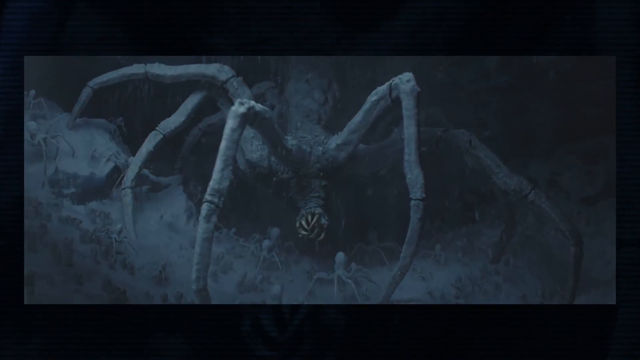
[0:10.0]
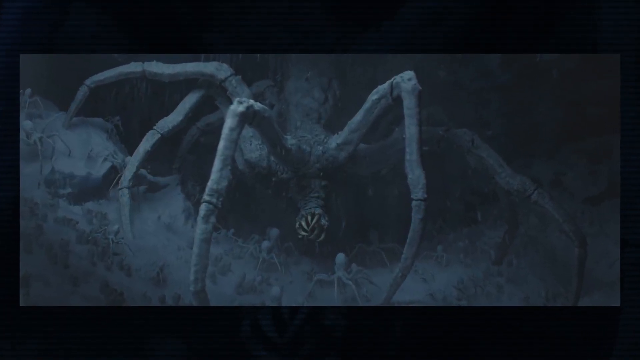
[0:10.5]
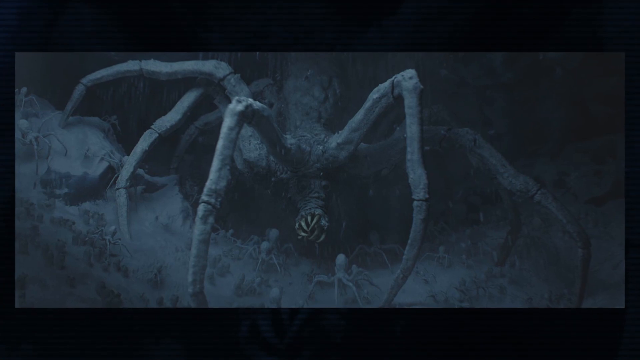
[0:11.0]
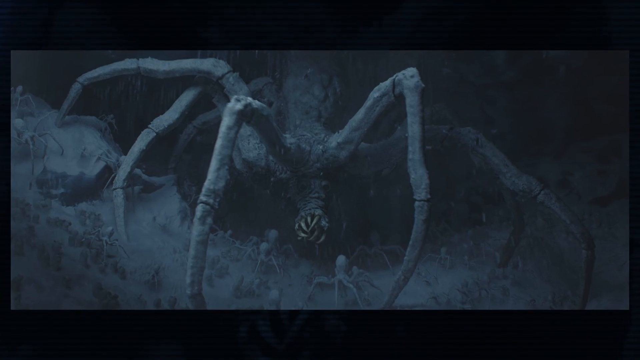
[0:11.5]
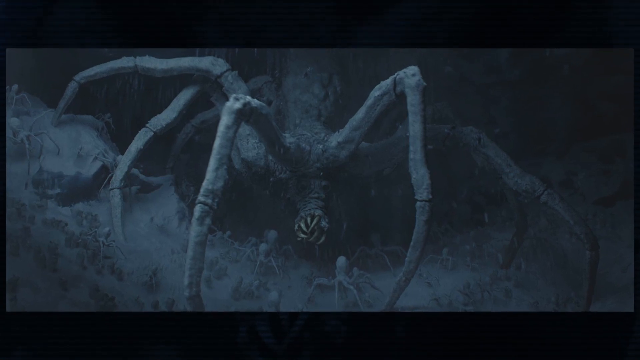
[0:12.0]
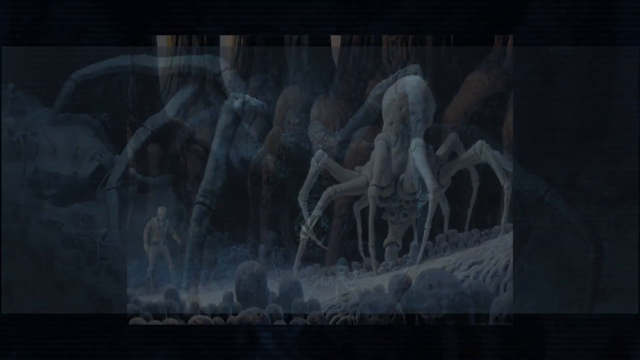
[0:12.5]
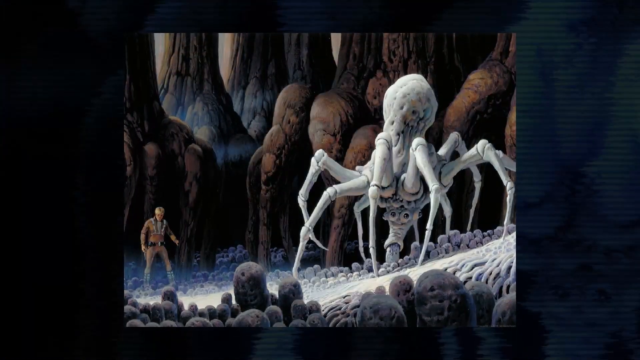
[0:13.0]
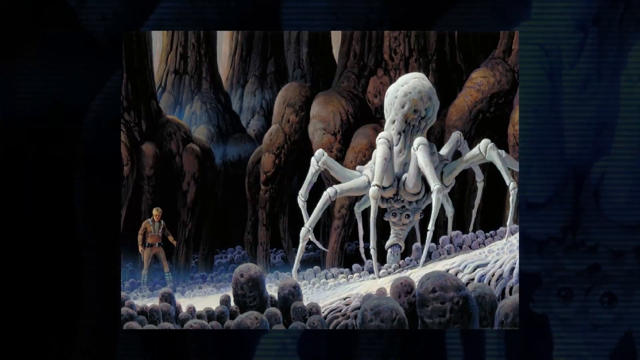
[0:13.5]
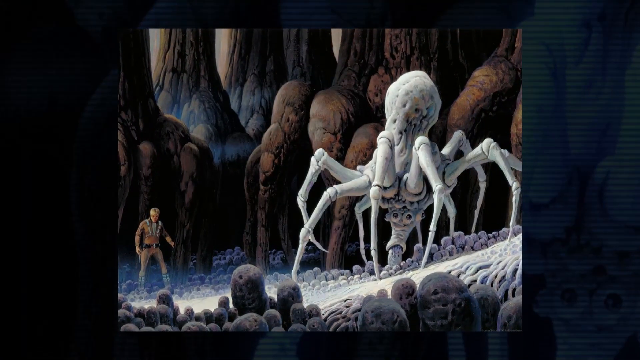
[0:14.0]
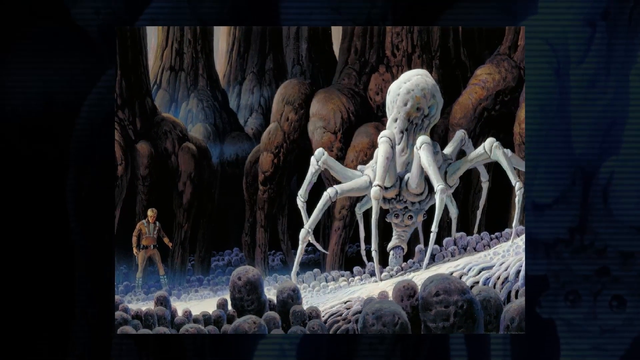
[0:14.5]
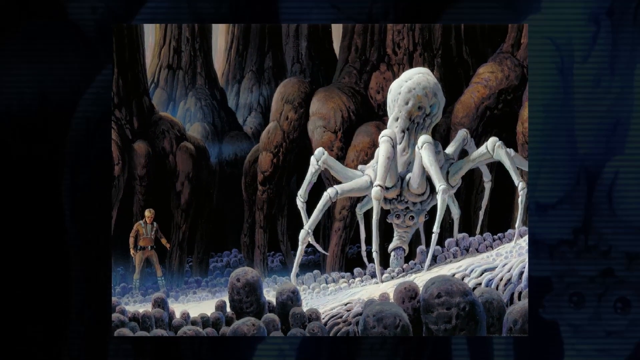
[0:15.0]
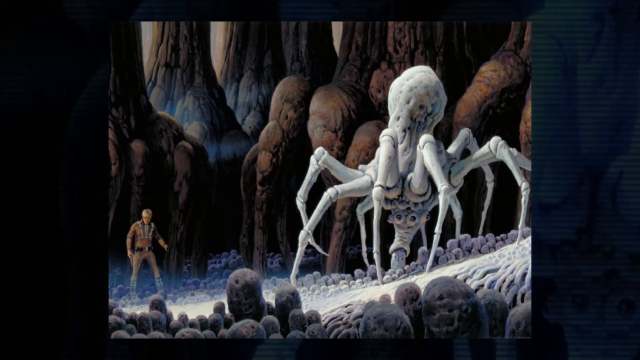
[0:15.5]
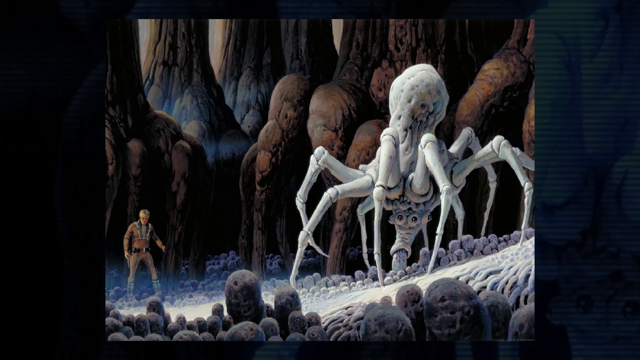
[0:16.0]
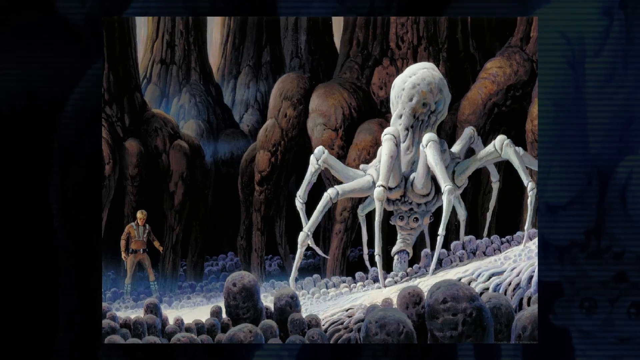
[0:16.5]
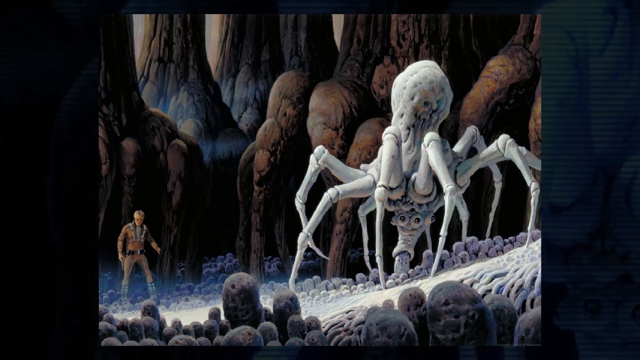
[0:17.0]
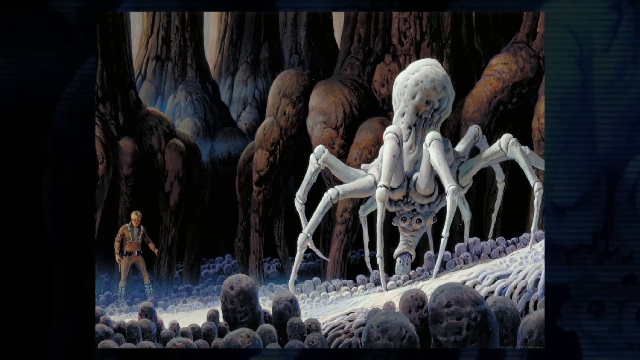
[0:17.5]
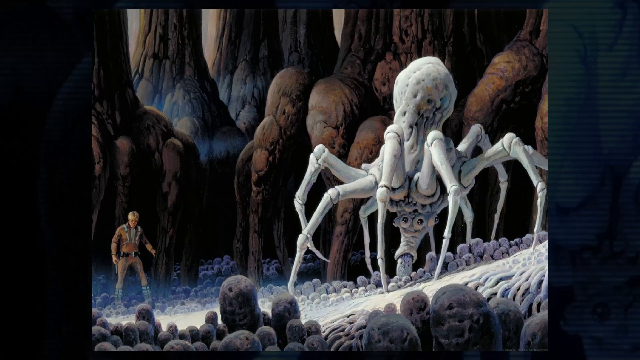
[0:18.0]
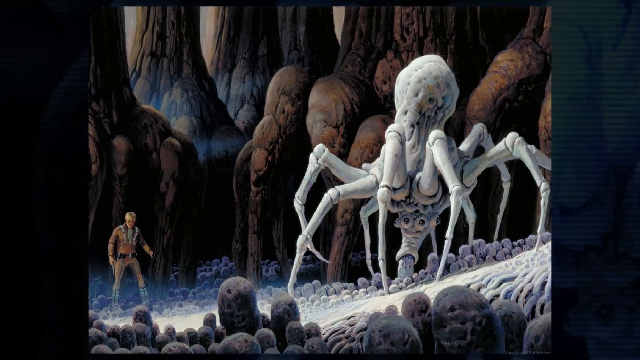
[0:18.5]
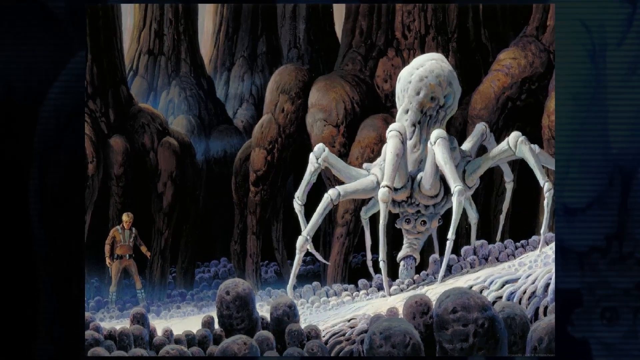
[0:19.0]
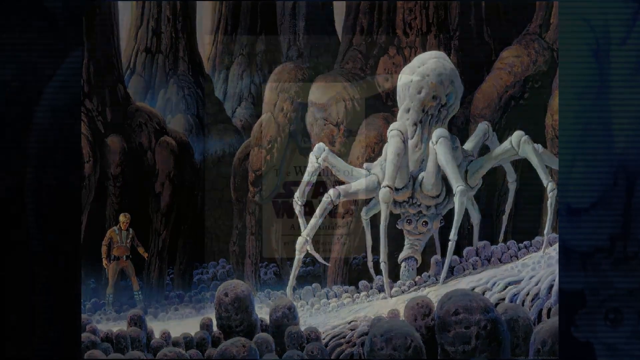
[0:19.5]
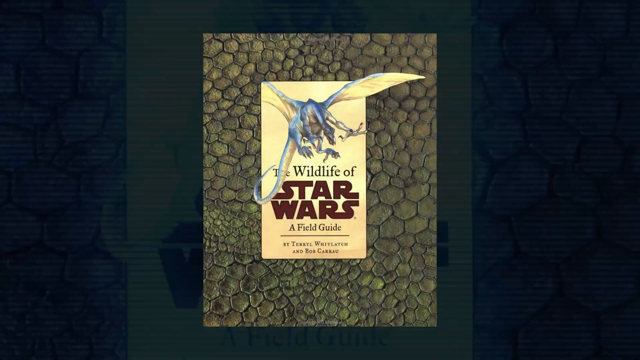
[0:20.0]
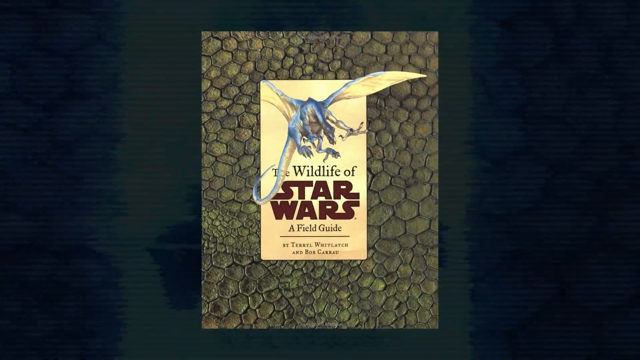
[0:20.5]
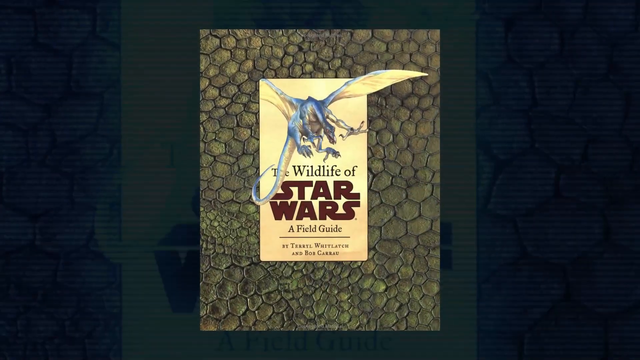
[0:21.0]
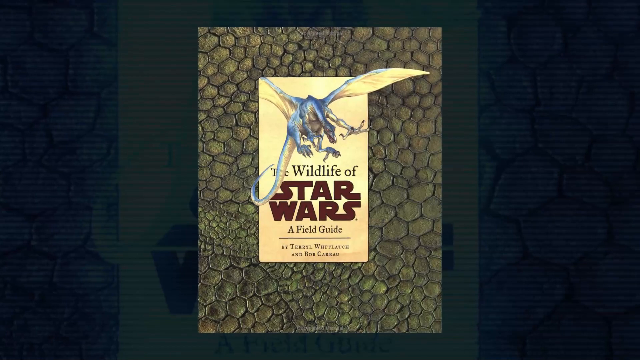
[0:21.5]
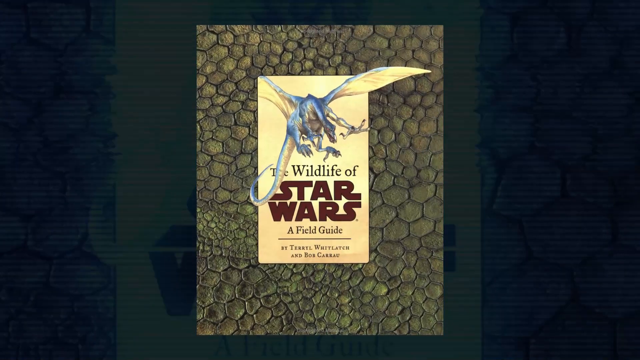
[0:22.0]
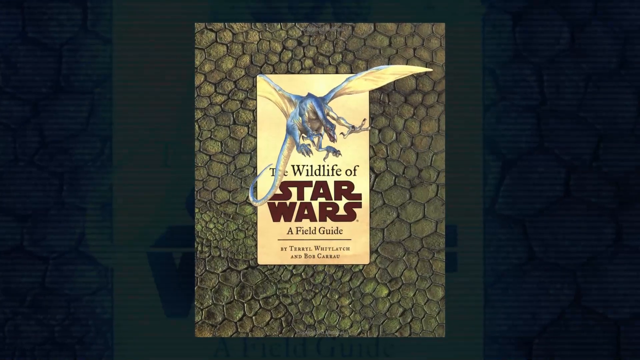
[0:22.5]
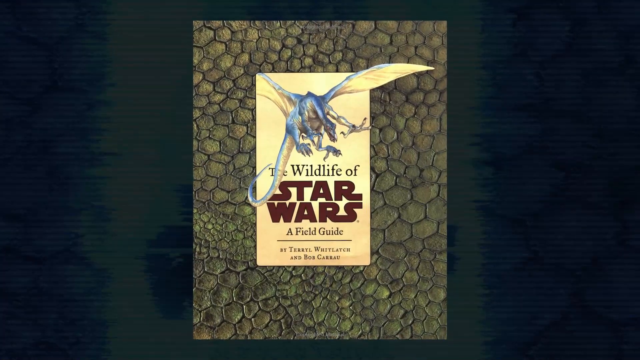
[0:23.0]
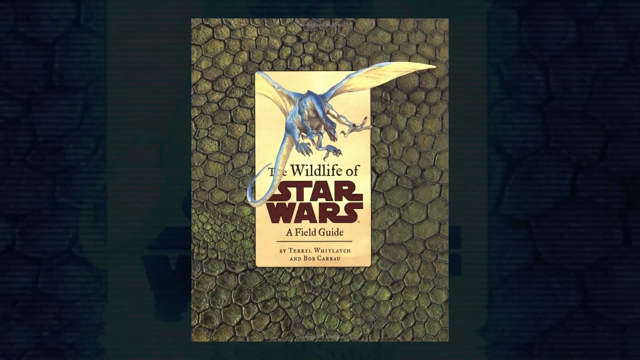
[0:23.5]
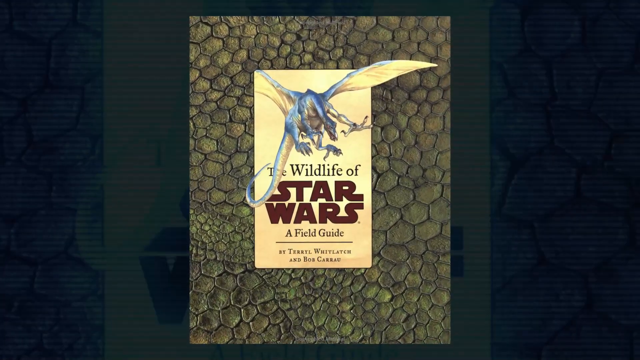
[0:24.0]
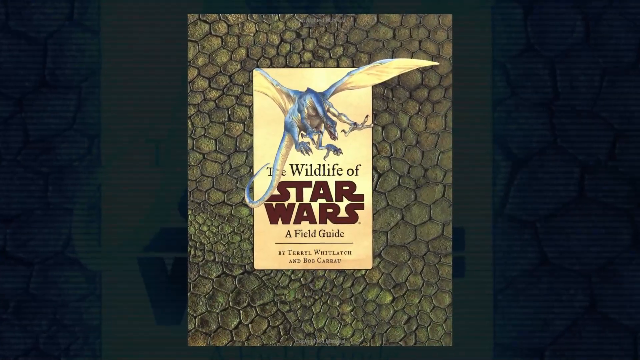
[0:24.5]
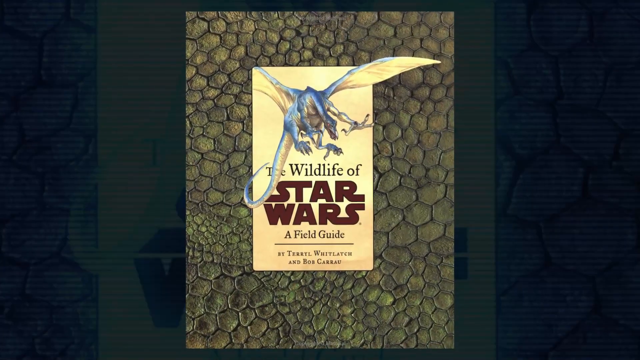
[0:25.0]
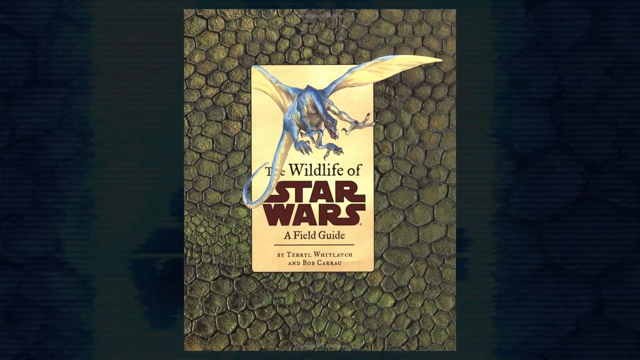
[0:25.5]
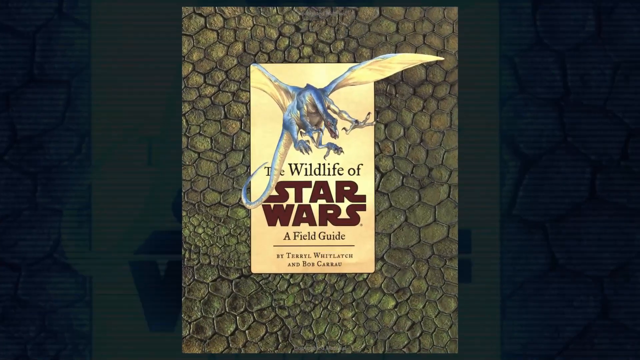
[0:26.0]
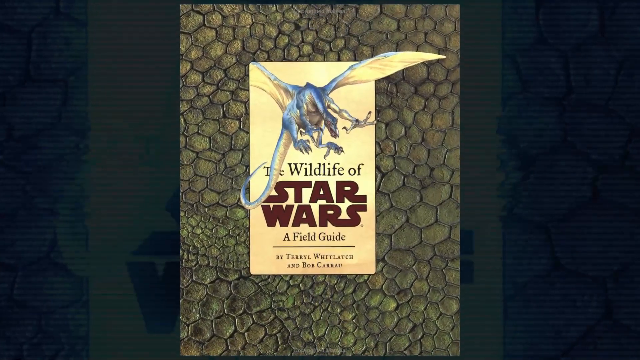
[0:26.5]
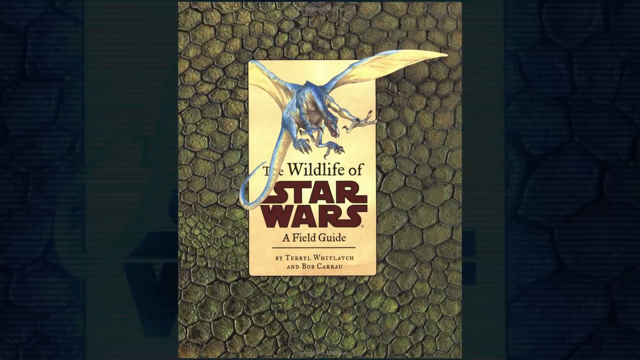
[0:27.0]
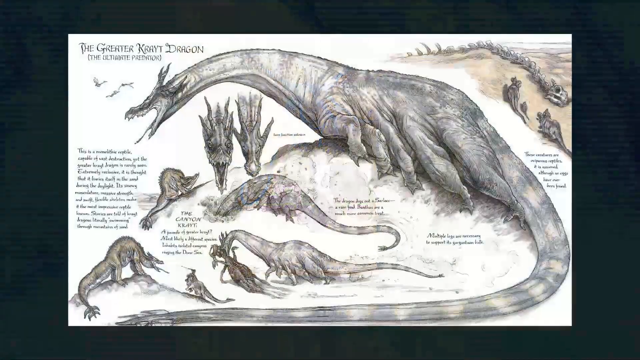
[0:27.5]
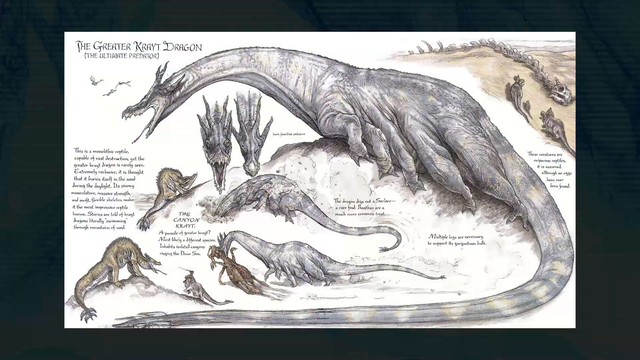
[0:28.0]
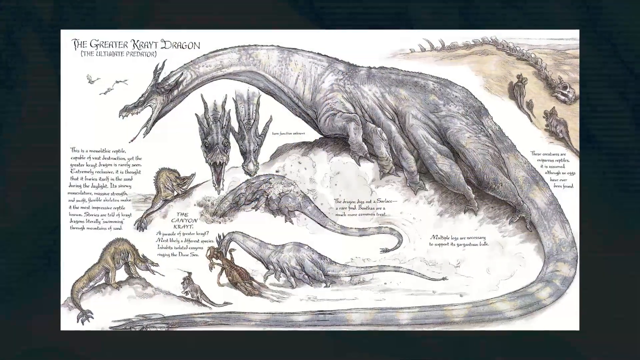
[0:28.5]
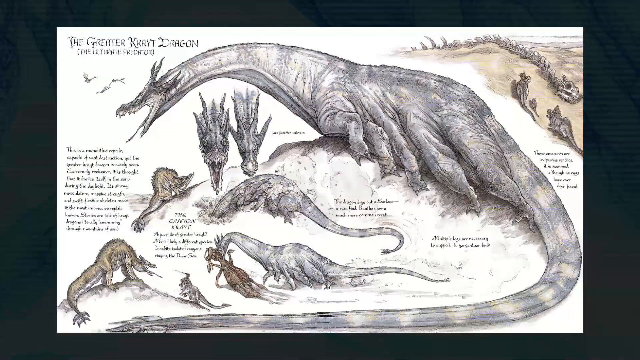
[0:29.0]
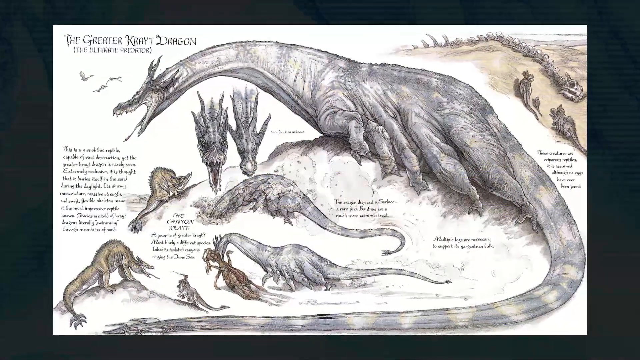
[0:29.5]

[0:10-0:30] A series of still photographs shows what look like spider-like creatures. The first is a gray and white image of a giant spider-like creature with long skinny legs and a mouth at the bottom that looks round, with long thin fangs coming out of it. Similar creatures appear to be all over the ground in front of it. The image changes to one of what looks like a similar creature, apparently a white model or an artist's rendering of it. It looks completely white, and at the bottom are eyes over a funnel-like mouth with something falling out of it. Behind it is what looks like the base of brown trees, and the figure of a man stands on the left side of the screen, much smaller in relation to the large spider creature. Next comes a photo of what looks like the cover of a book, with a flying dragon illustration and, below it, text reading "The Wildlife of Star Wars, A Field Guide." The cover looks like reptile scales. Then a page shows illustrations of dragons in different sizes and from different perspectives.